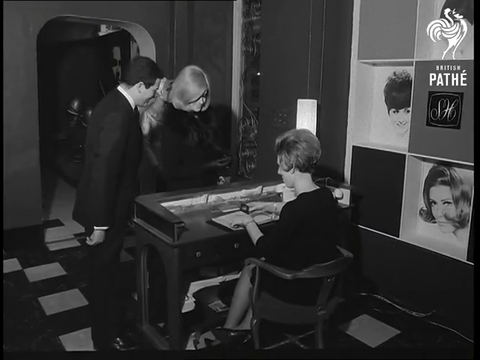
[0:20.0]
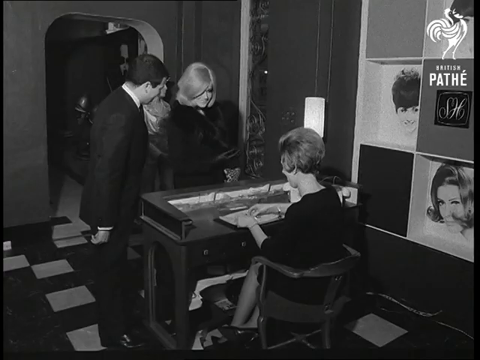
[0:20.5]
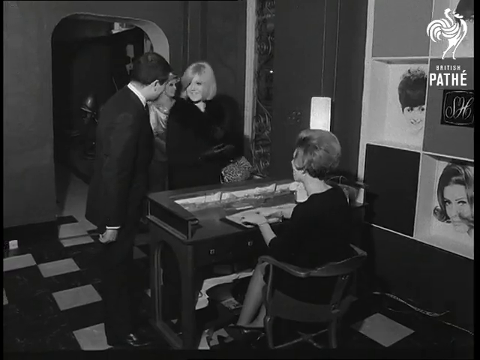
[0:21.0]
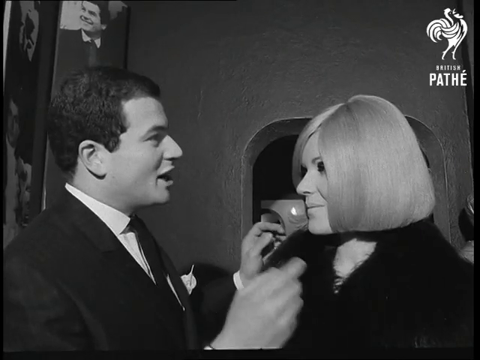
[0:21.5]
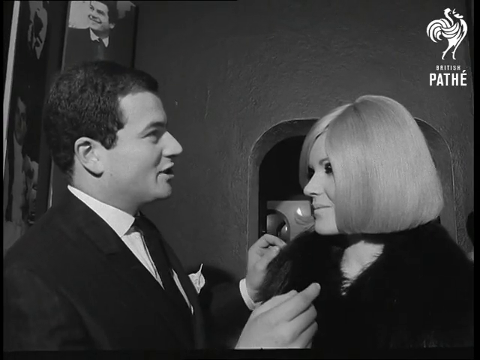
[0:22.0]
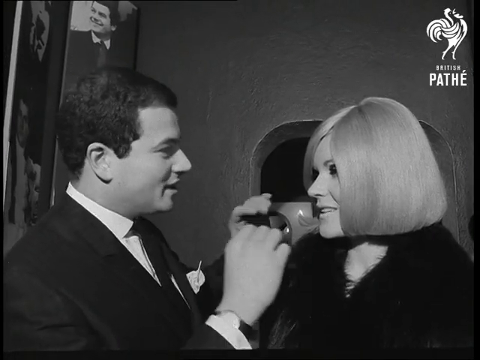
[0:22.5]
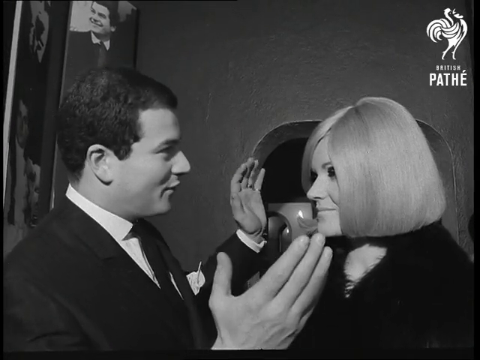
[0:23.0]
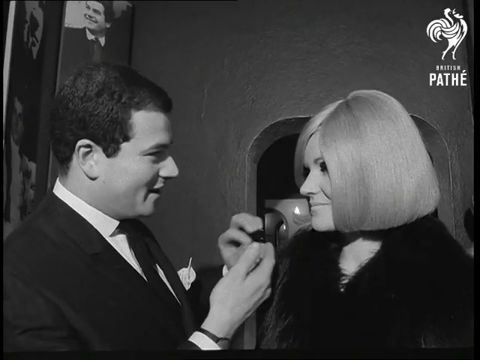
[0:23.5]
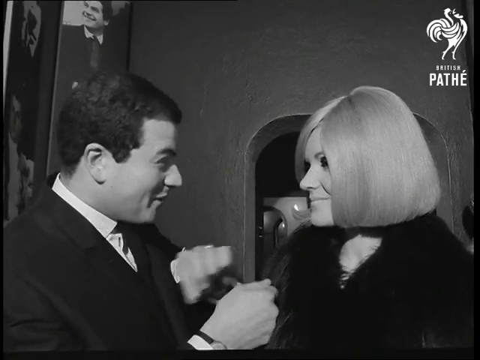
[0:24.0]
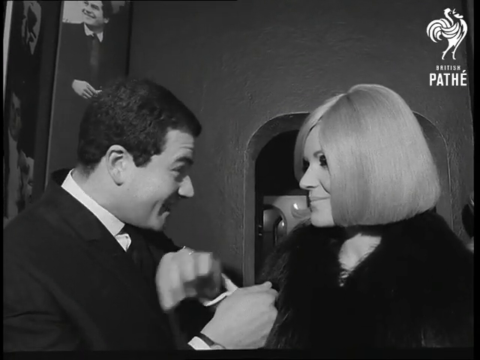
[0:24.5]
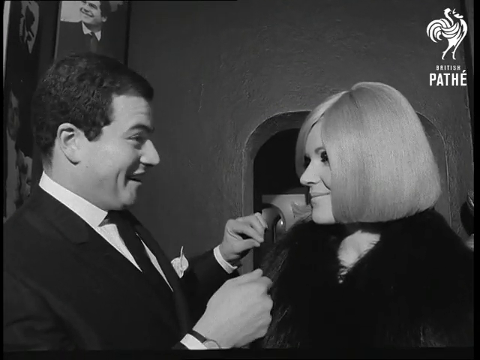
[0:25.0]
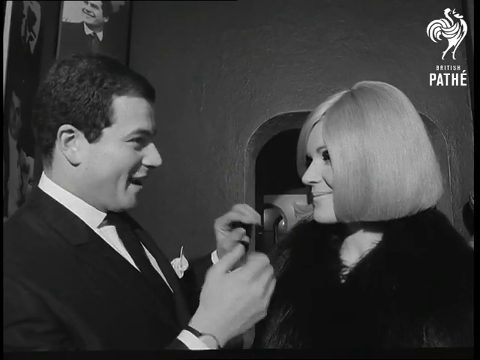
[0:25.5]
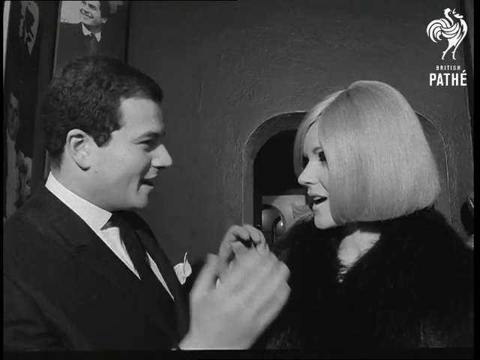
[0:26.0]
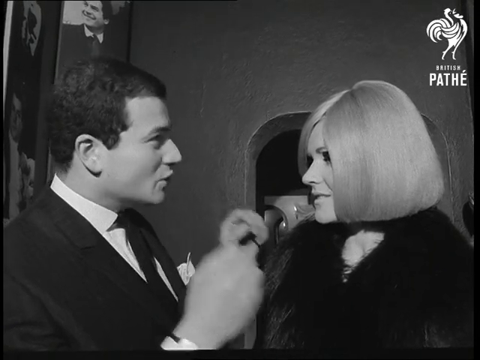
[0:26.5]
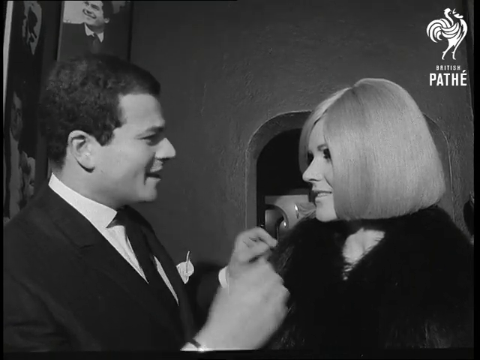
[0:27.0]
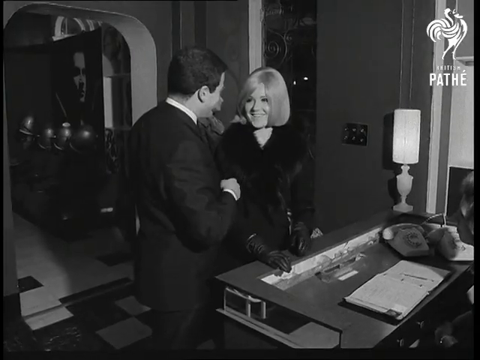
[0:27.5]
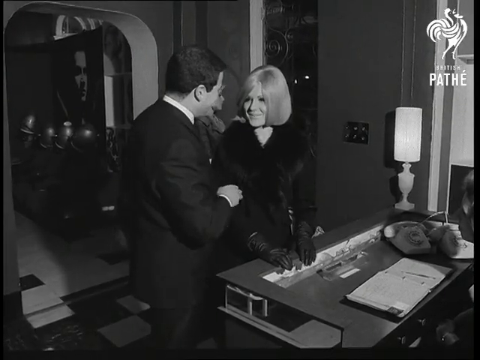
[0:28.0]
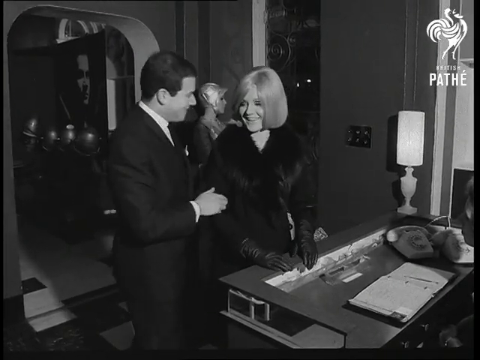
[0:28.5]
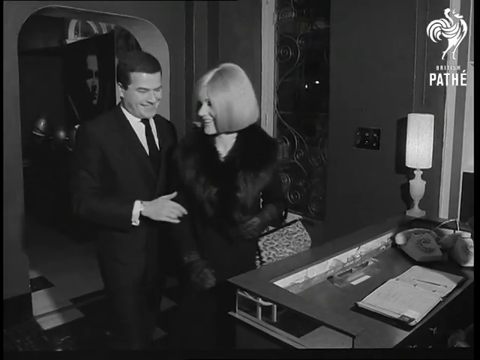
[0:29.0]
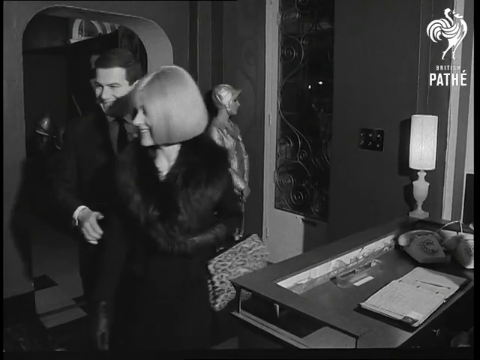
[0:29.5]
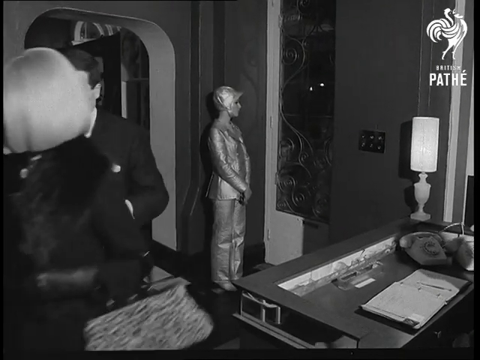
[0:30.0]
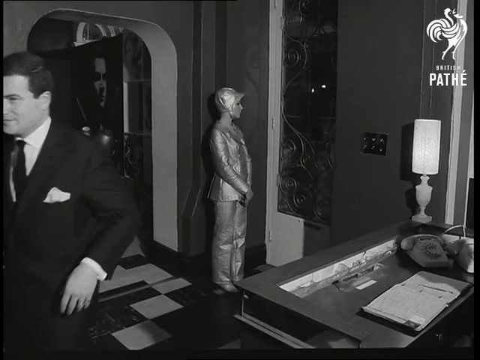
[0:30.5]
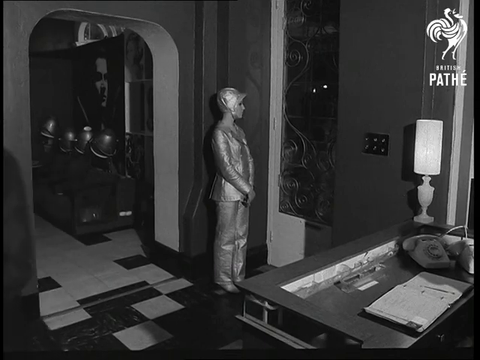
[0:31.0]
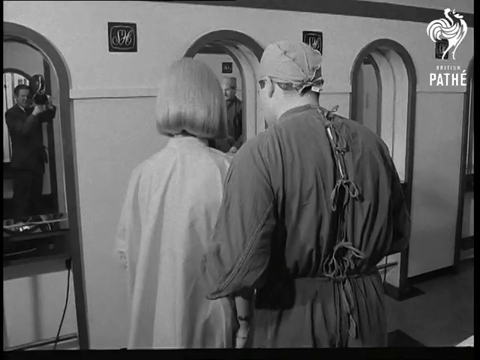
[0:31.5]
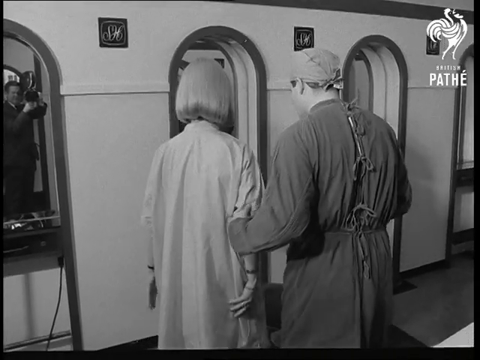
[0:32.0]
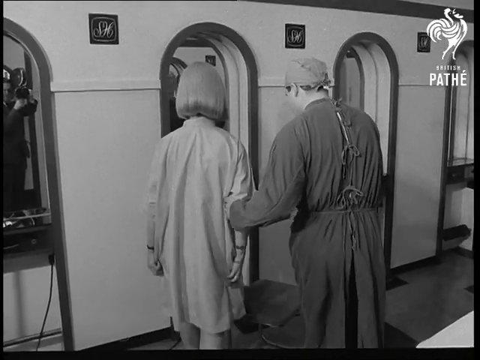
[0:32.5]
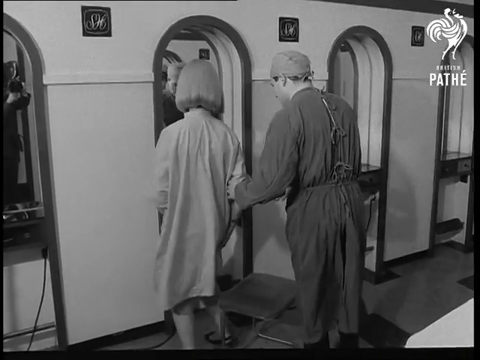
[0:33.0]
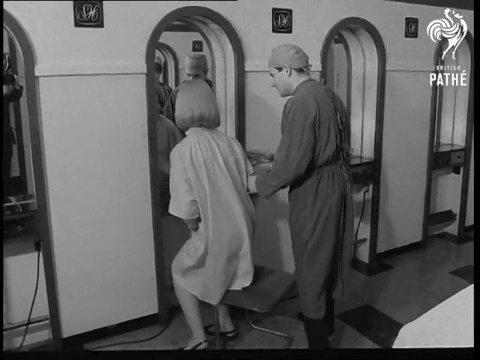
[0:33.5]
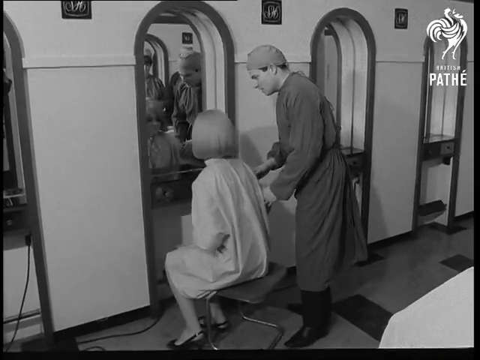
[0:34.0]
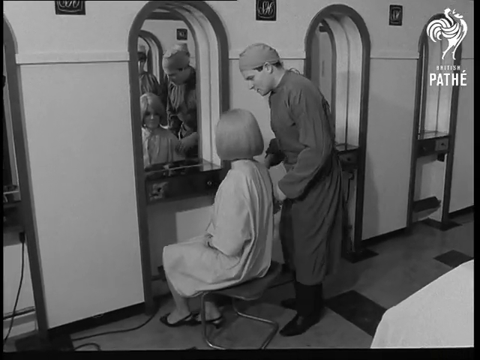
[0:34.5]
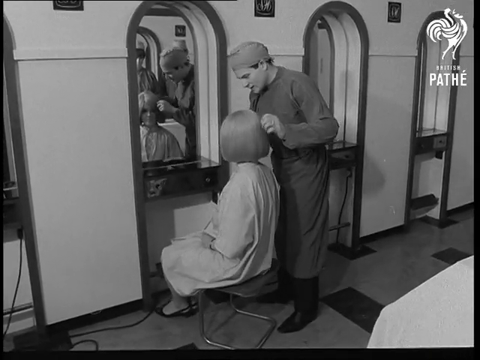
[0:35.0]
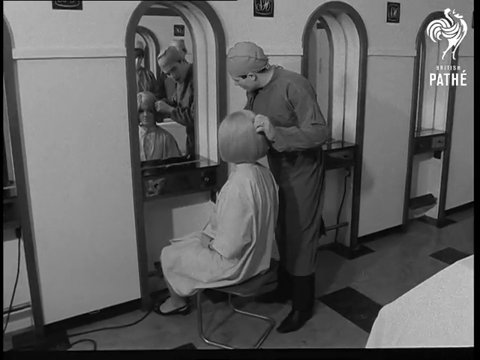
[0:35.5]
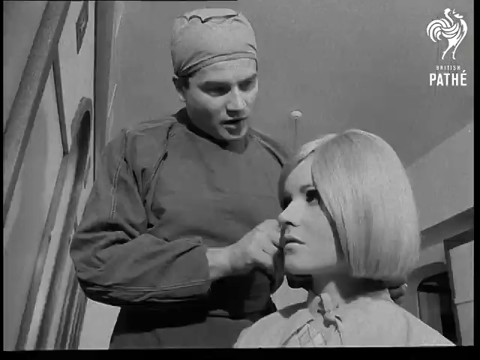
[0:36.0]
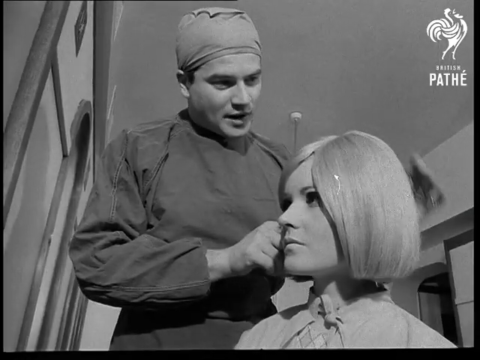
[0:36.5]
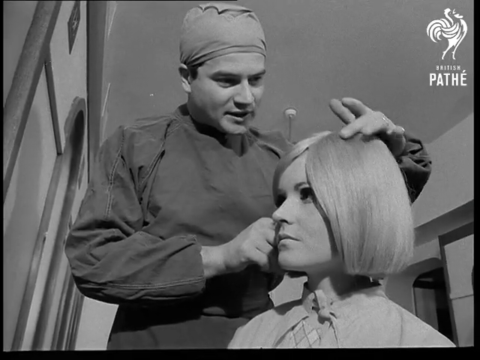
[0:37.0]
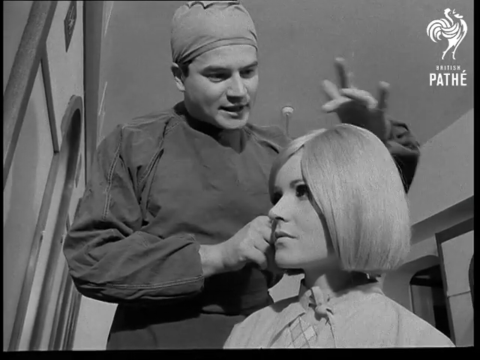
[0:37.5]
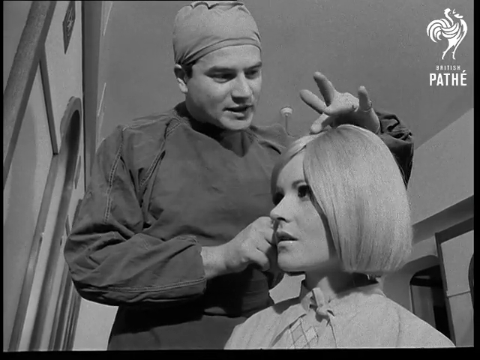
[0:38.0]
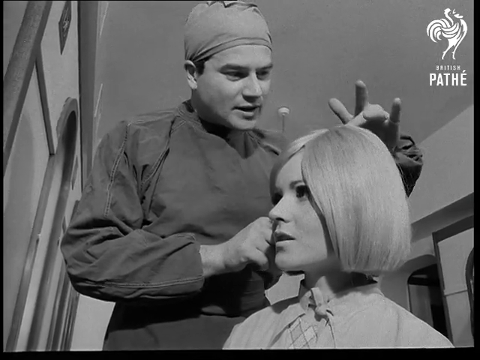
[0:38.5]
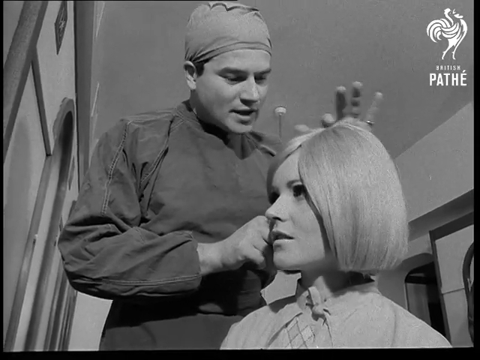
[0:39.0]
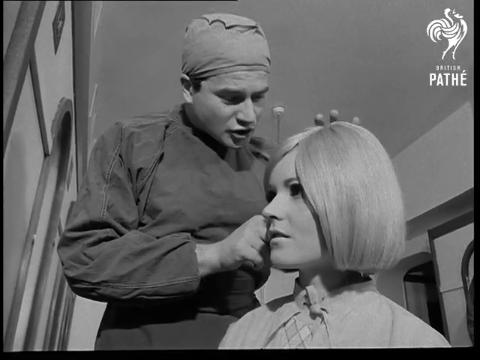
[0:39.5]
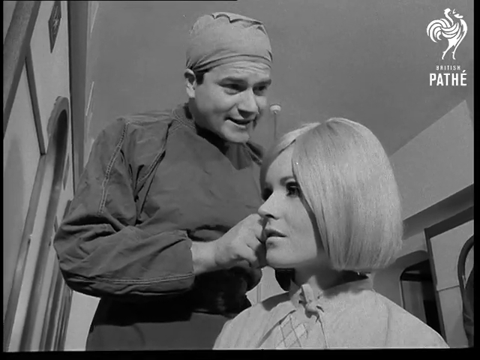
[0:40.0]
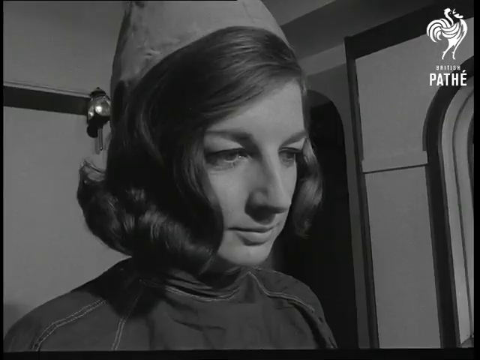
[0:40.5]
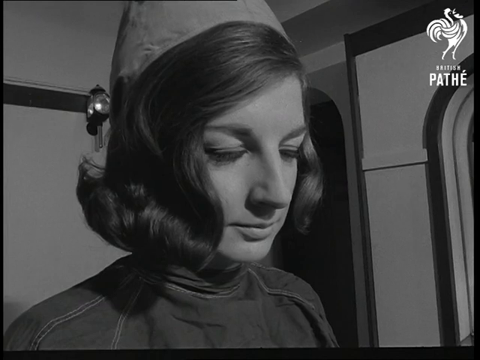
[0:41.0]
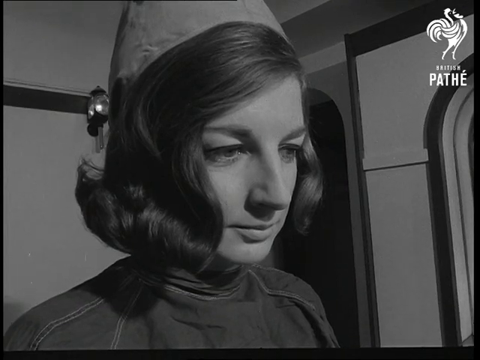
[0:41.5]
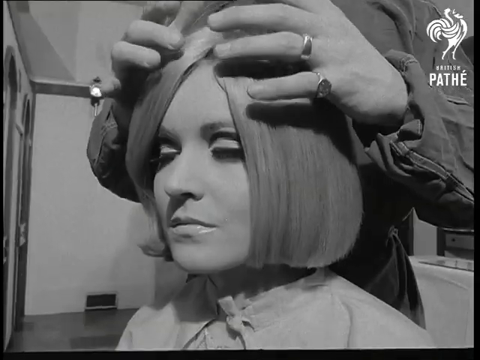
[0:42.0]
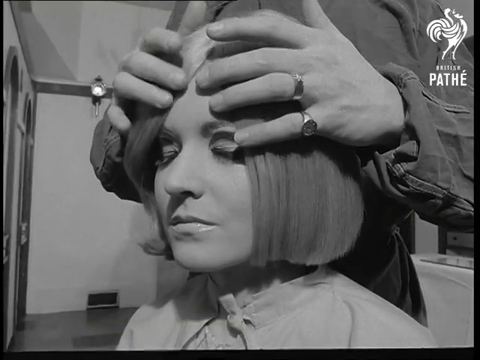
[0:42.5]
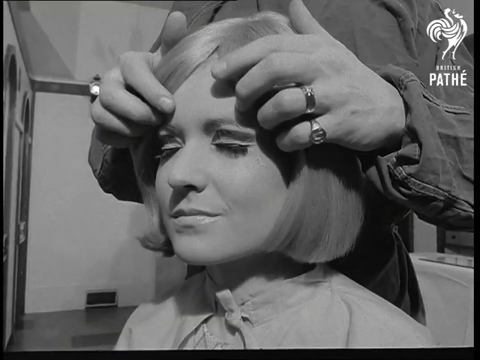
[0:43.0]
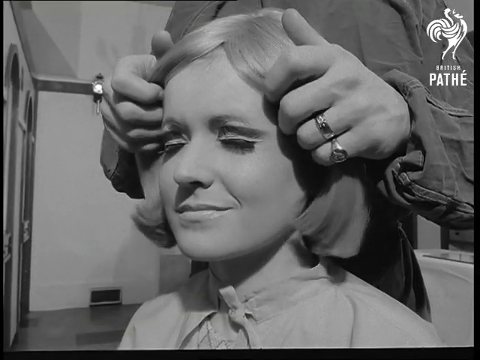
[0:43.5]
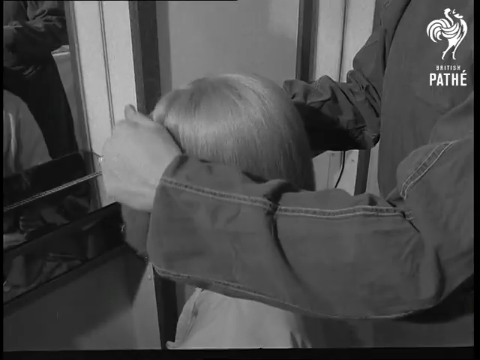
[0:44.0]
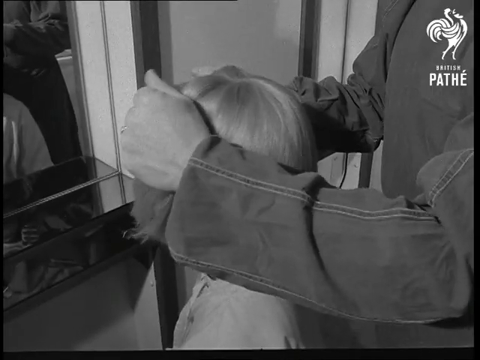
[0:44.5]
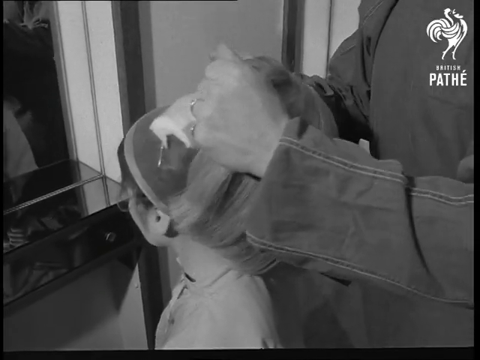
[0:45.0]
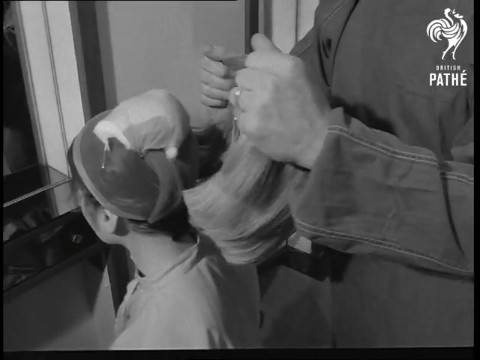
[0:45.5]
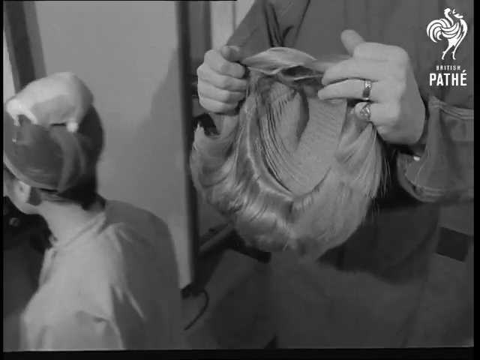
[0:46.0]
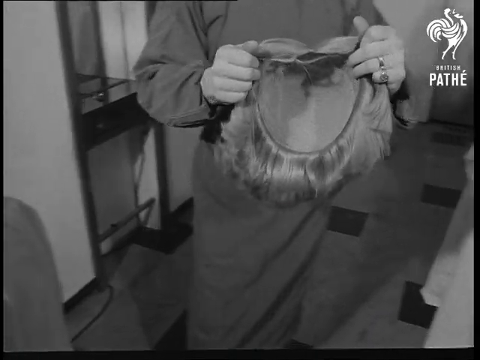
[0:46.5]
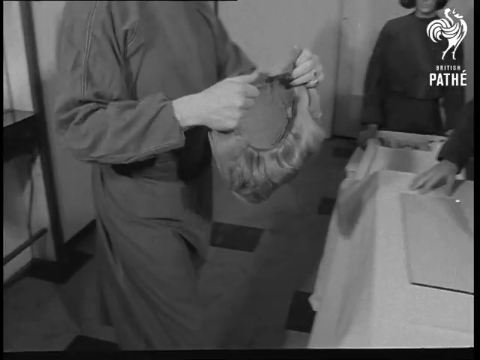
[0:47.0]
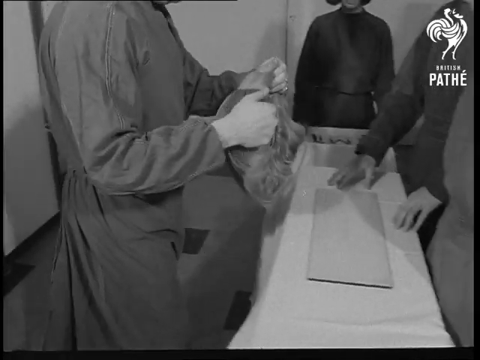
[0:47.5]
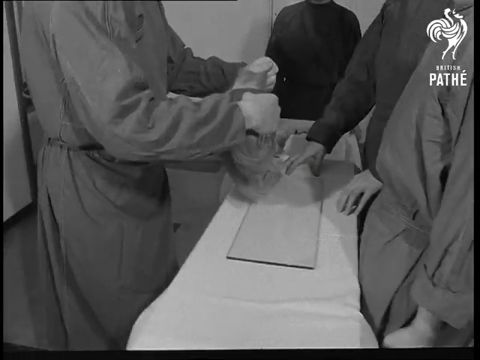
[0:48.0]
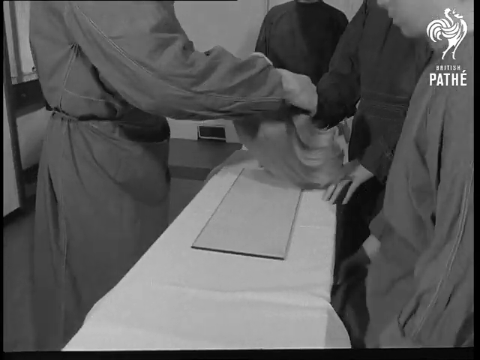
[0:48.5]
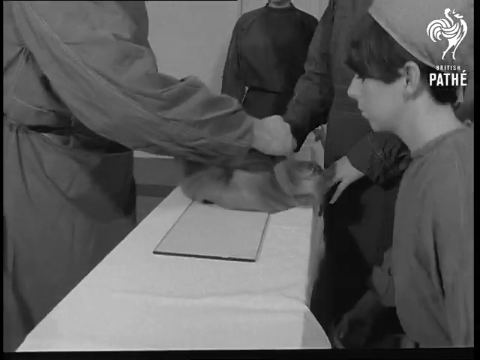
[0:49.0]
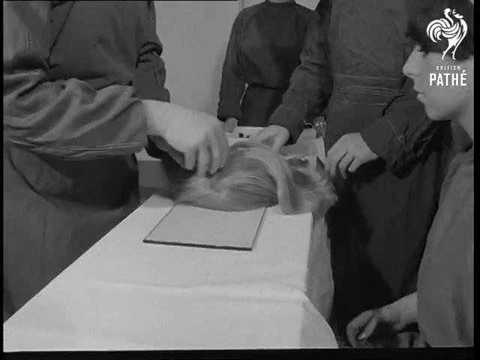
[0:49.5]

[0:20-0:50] The man in the dark suit begins speaking to the blonde customer in the black fur coat and blonde wig. In a close-up, the dark-haired man, on the left side, speaks to the woman in an animated, excited fashion. After a transition, the woman in the blonde wig is wearing a long shirt and the man is wearing a surgical hat and suit. She sits down in front of a mirror, and he motions to and touches the wig. A dark-haired woman who seems to be a wig nurse is shown. The man in the surgical suit removes the wig from the woman, who closes her eyes as if this is a big step for her. He carefully places the wig on a table surrounded by other people in surgical dress, and a woman sits down on the right side of the table.